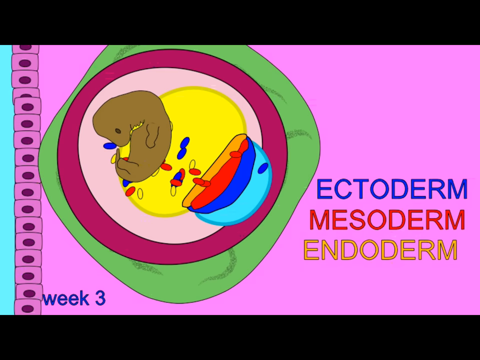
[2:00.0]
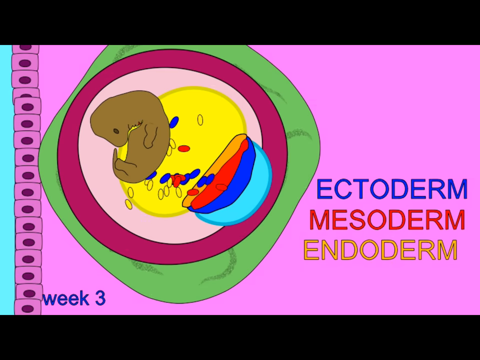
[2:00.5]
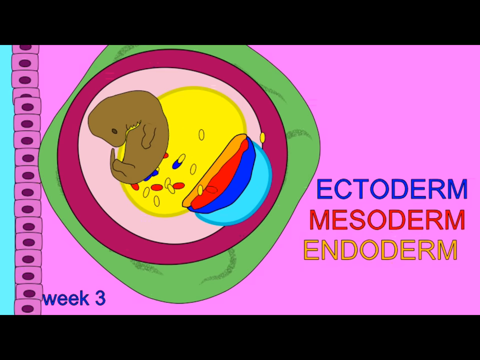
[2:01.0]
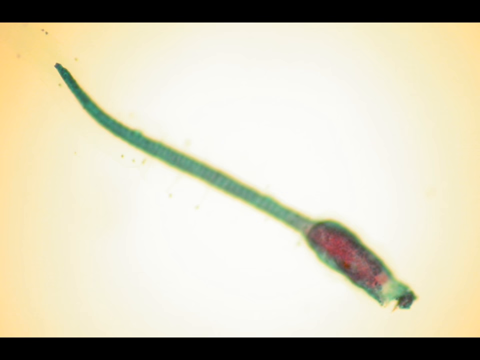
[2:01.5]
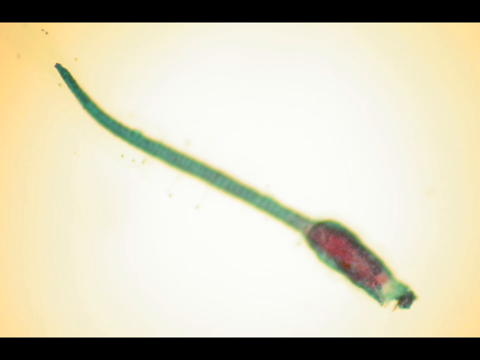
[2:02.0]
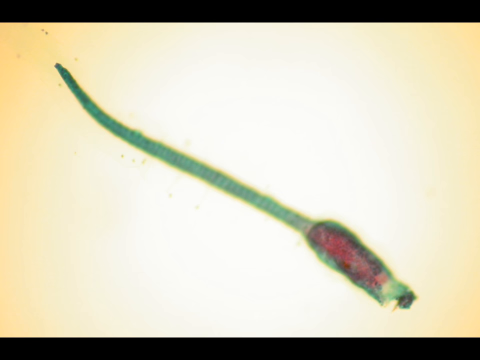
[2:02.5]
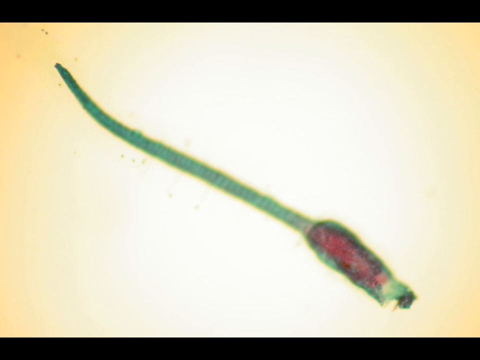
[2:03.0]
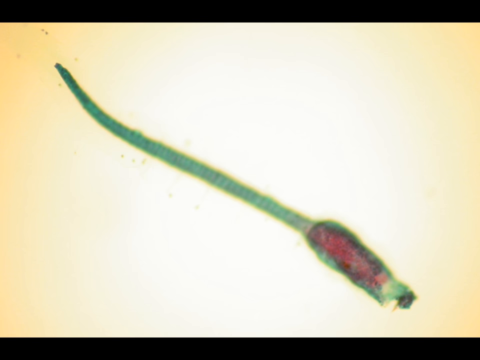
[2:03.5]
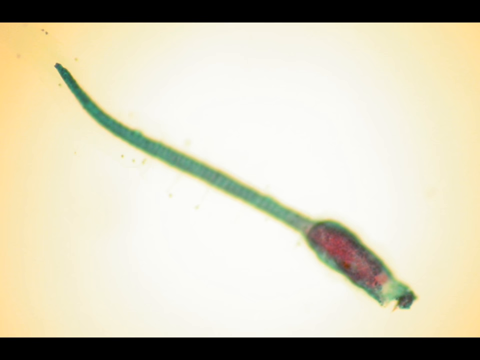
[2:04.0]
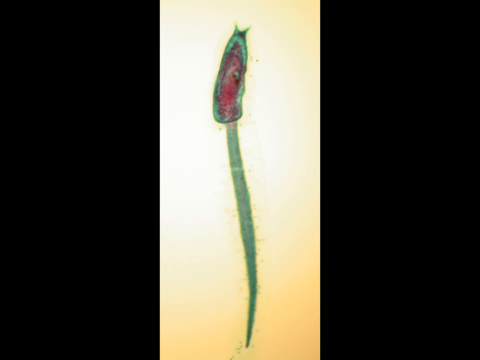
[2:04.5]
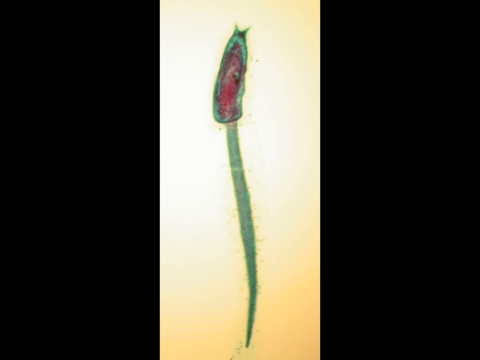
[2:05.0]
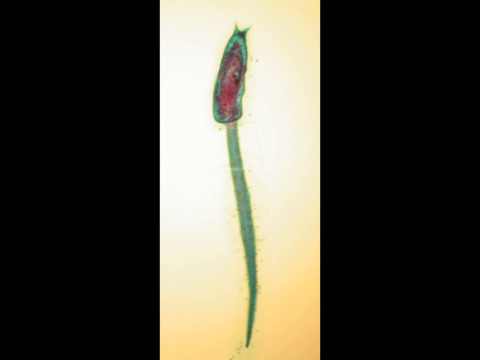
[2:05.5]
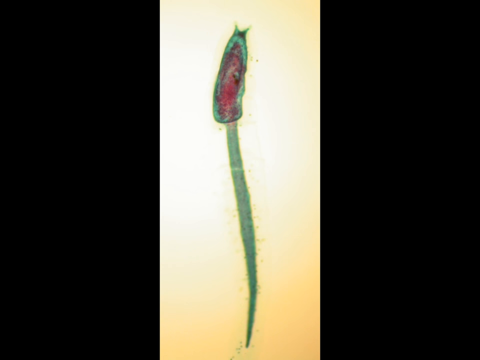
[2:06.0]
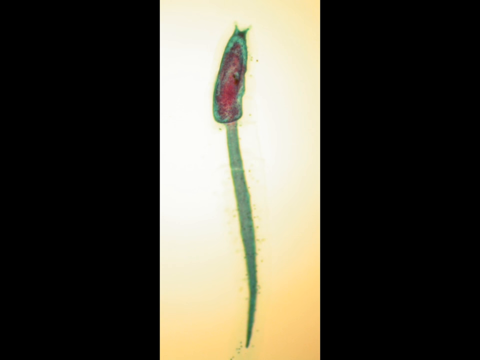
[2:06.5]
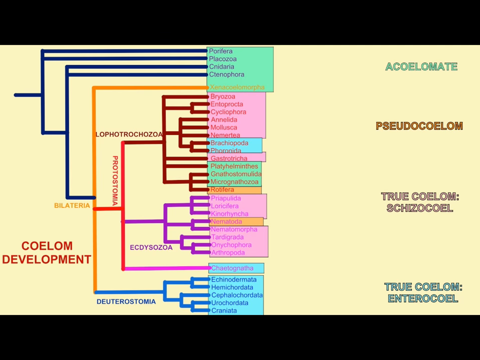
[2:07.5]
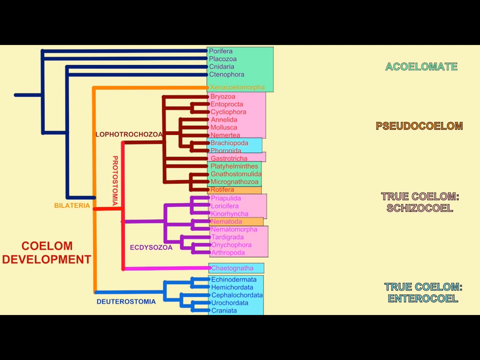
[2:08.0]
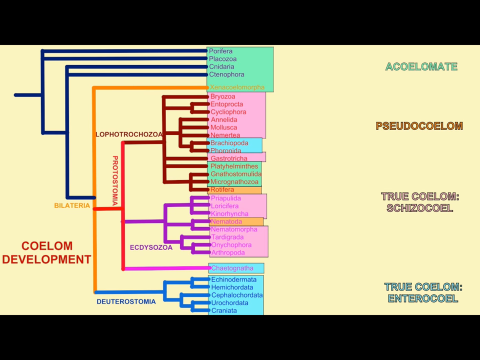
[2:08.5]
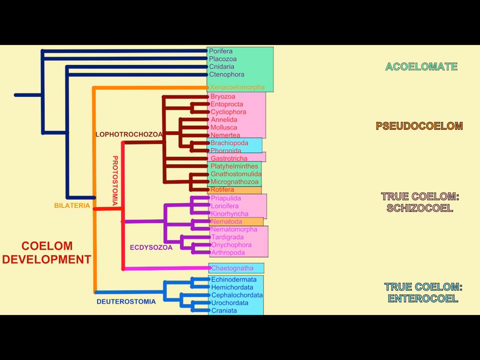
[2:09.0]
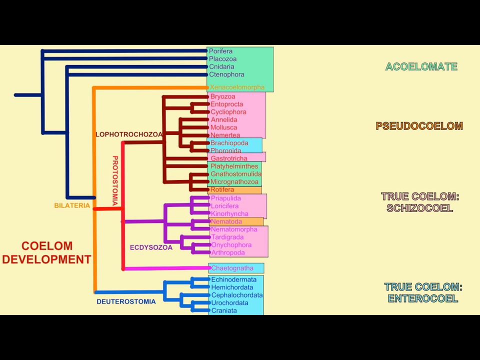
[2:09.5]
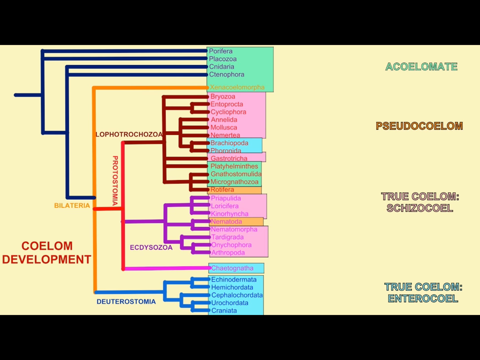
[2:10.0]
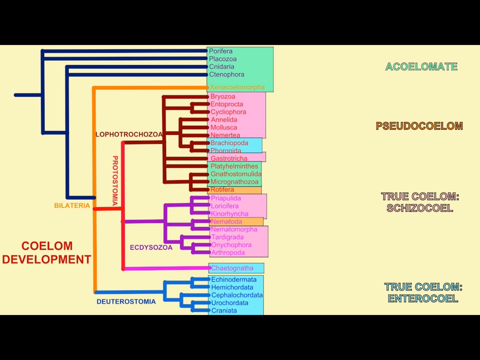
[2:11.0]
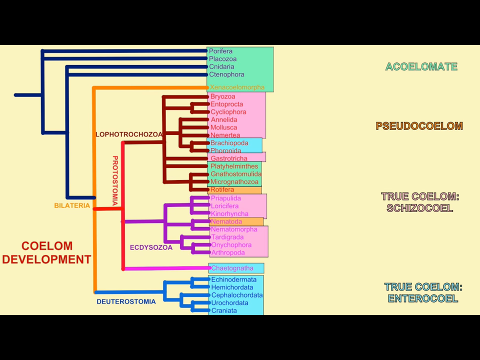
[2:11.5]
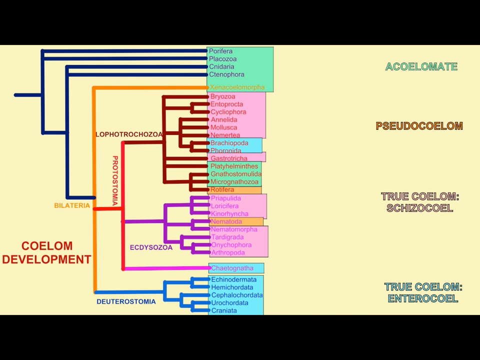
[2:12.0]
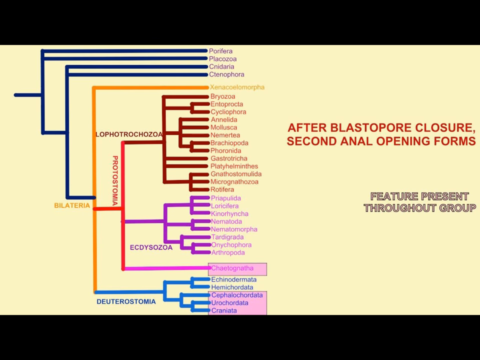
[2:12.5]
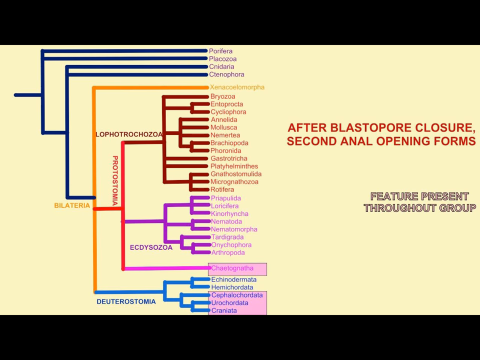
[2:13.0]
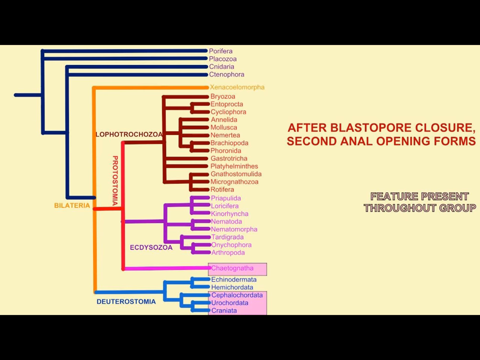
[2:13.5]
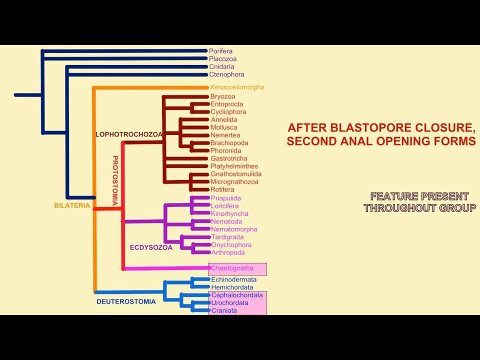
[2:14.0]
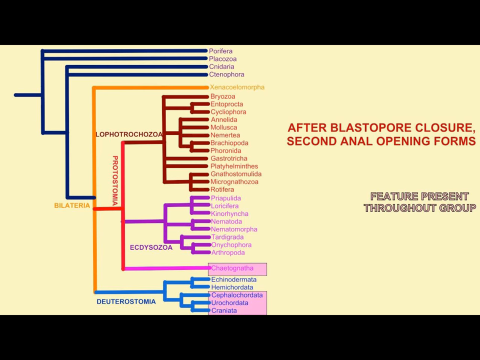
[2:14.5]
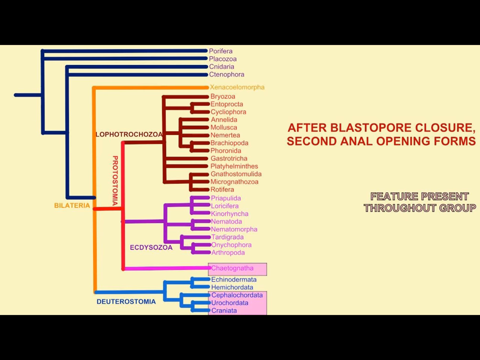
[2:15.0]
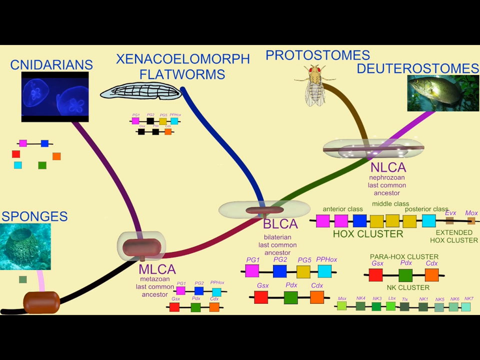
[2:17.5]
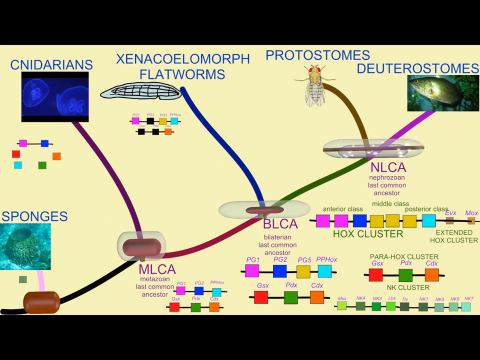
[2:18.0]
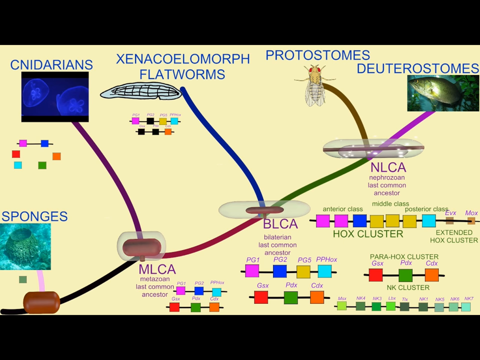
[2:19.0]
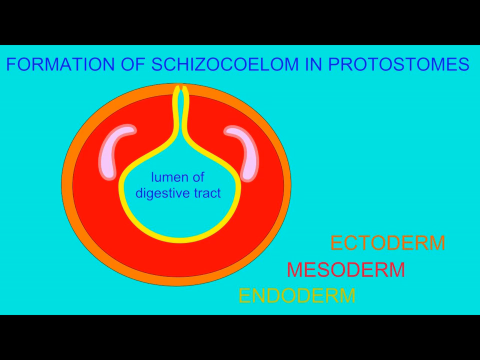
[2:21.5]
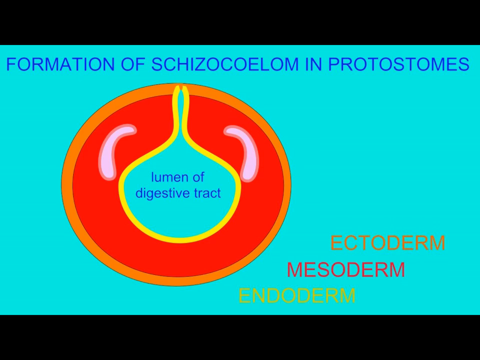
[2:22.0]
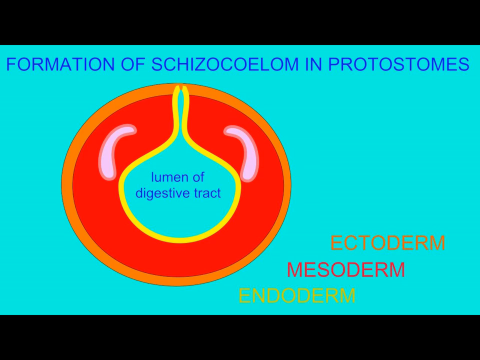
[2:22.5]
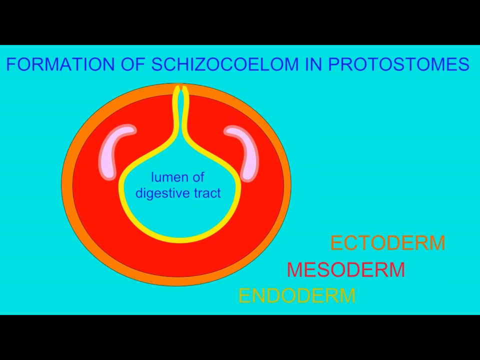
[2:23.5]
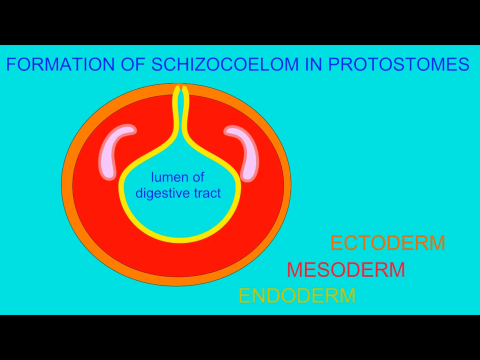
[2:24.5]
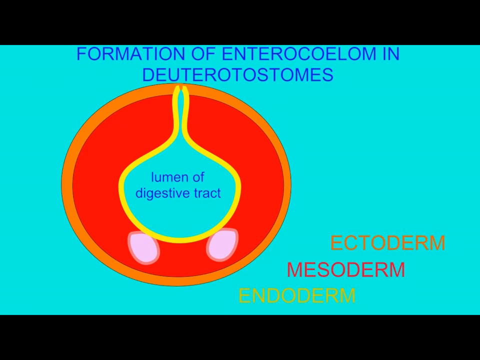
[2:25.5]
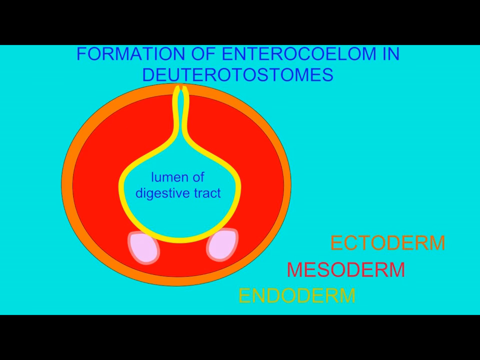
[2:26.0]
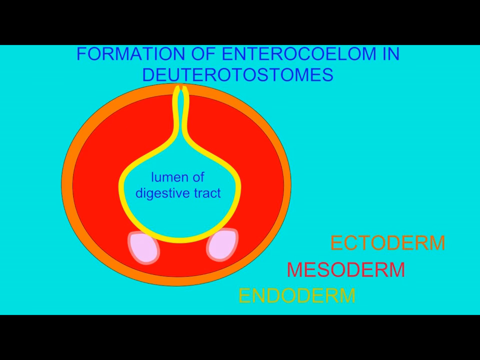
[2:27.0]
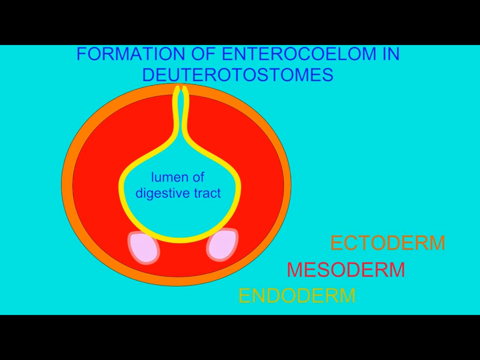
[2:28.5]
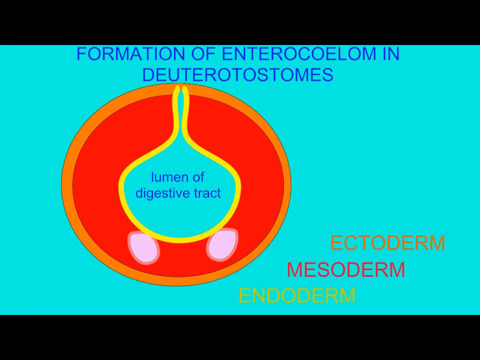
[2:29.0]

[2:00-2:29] A shape appears on a black background: a rectangle whose top and bottom are longer than its left and right sides. It is pink, or mostly pink, with a small sliver of light blue on the left side. Within it is a globular thing that is green around the edges; within that is a burgundy circle, within that an off-white color, and within this a brown embryo whose eyes face the left side of the screen. There is a yellow circle behind it, and next to the yellow circle is something that looks like a blue cup that is red on the inside. What look like blue, red and yellow blood cells come out, swirl around the embryo and go back. Then something that looks like a mosquito larva is shown; it is green, and red at its head, with its head in the bottom right of the image. The larva is shown again with its head at the top of the image. Next is an image that looks like an NBA playoff bracket on the left, with a lot of words written in the brackets and on the right, followed by an image of a number of different animals. Then a blue screen shows a red circle surrounded by orange, with two lines going from the top of the orange that run down, curve to the left and right, meet at the bottom and run back up. The inside of this is blue and reads "lumen of digestive tract". At the top of the screen it says "formation of ENTEROCOELOM", followed by further words.